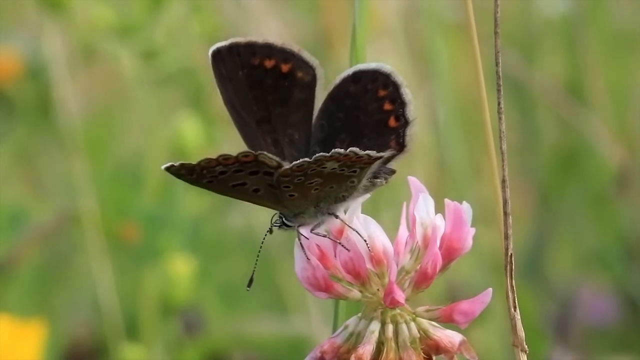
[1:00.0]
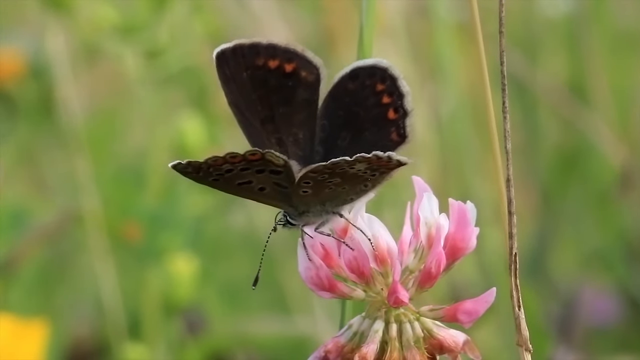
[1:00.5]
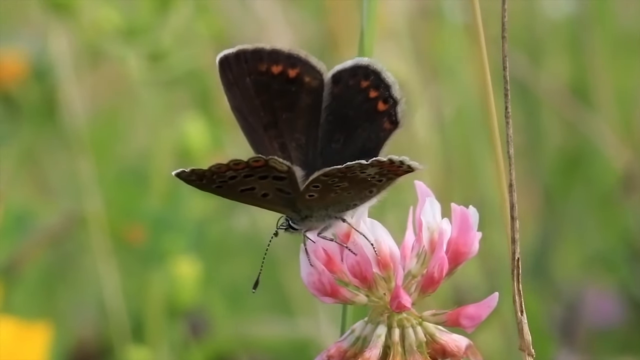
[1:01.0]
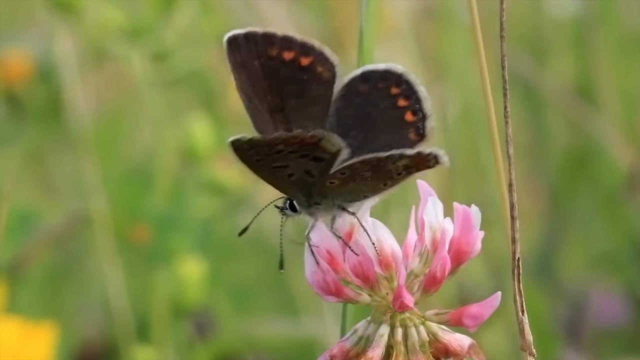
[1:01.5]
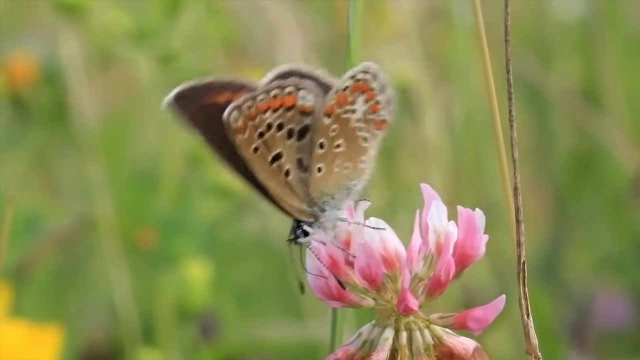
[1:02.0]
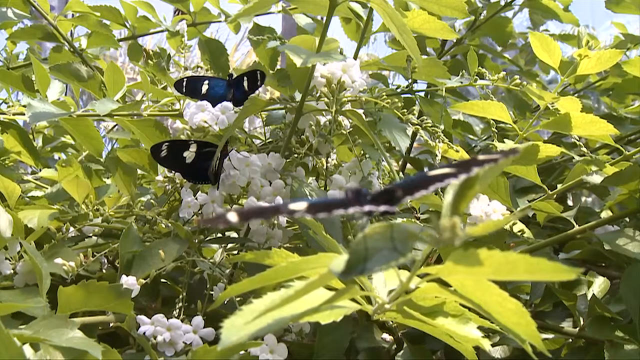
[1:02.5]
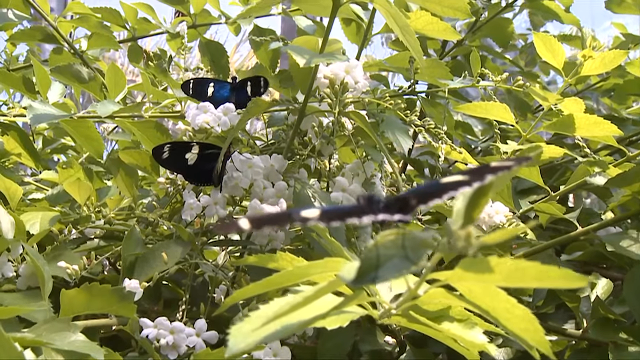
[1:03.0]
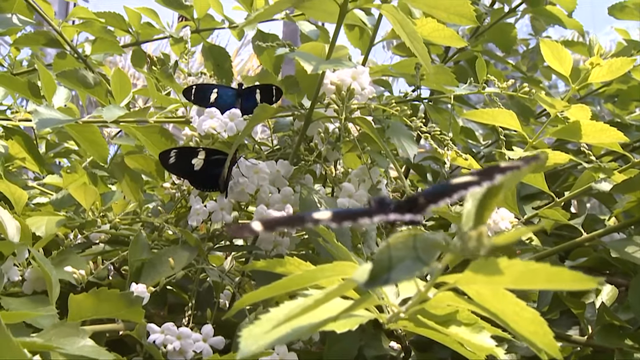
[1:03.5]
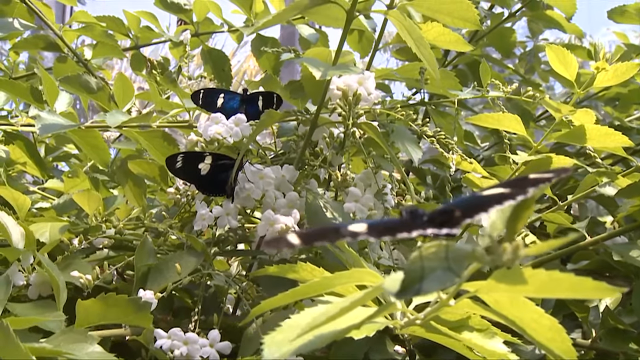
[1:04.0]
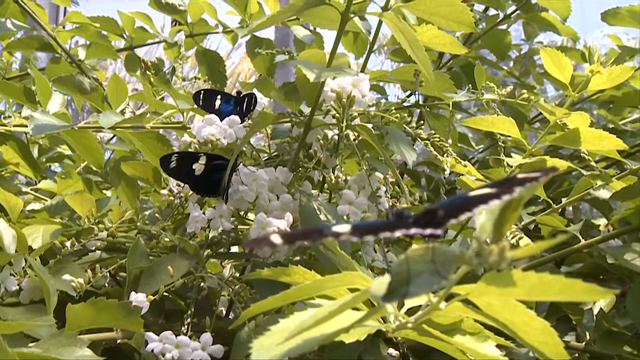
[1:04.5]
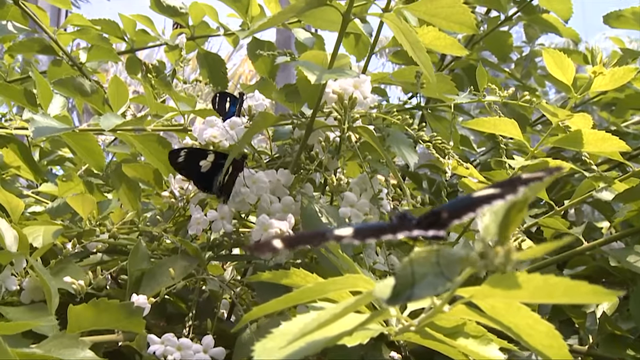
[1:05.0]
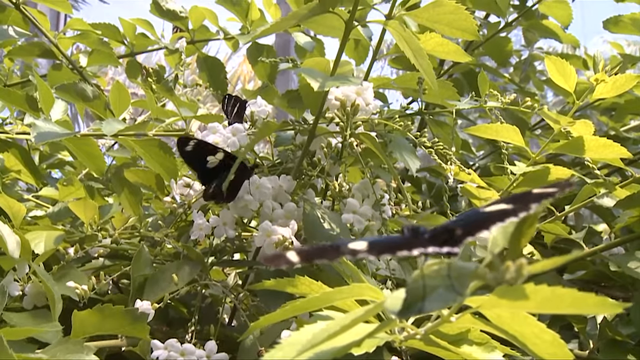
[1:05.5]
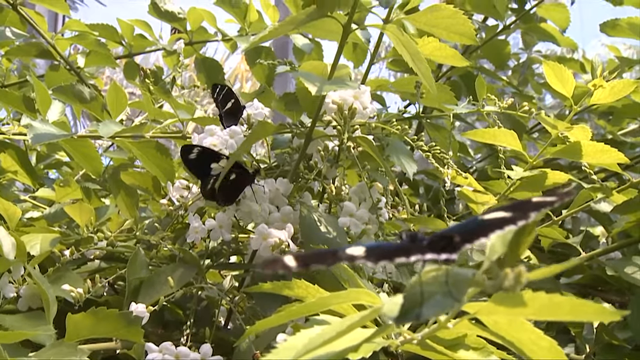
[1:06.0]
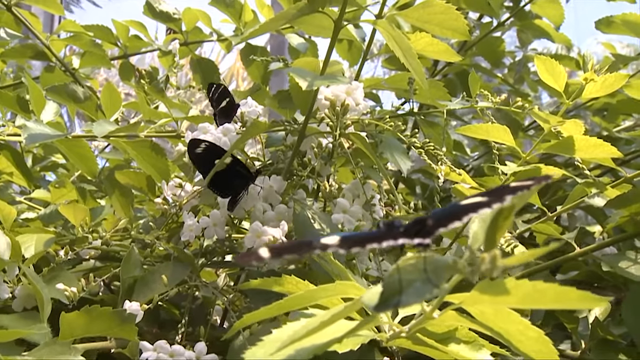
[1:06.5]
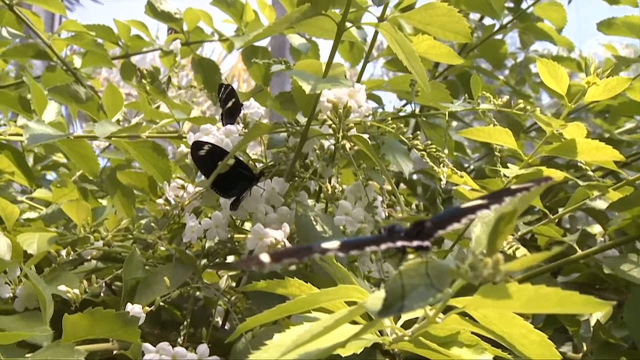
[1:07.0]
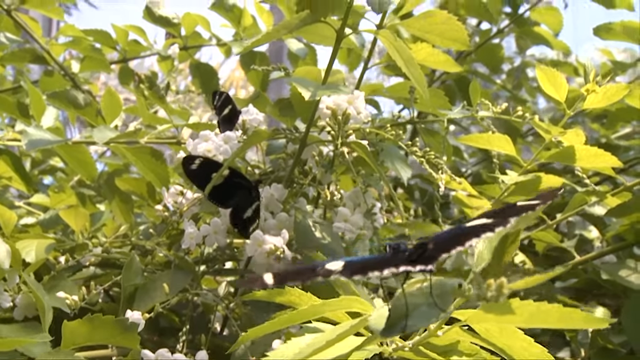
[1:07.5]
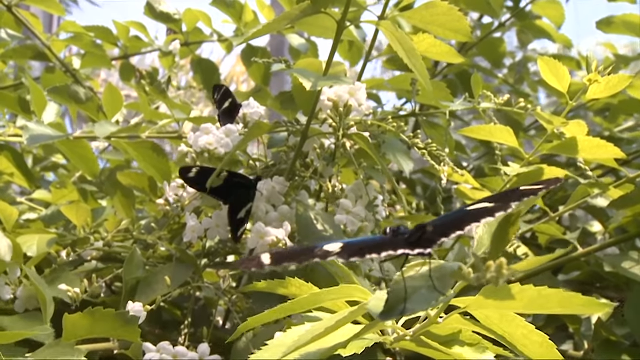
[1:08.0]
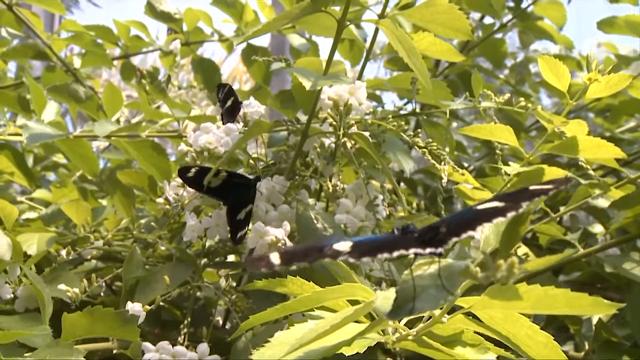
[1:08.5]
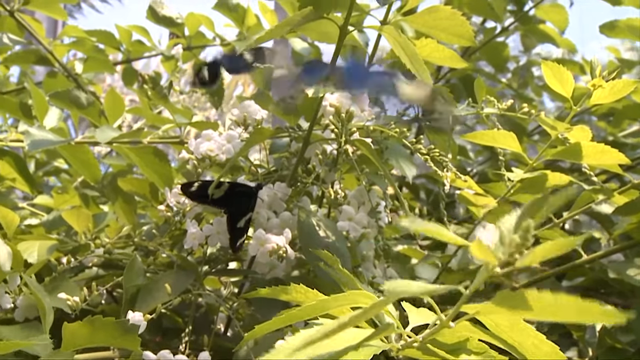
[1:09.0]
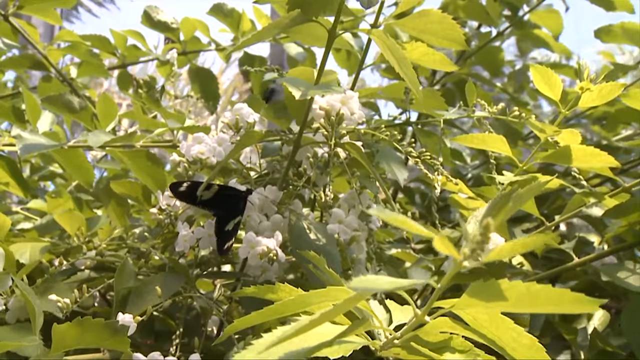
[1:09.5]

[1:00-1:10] The white lettering at the top reads "Butterflies fun butterfly facts for kids." A yellow circle on the left side has a green circle inside and a tiger in the center that is orange with black and white stripes around its chin and face. Against a blurred green background, a brown and grayish butterfly sits atop pink petals, with a brown line running up beside a yellow line. Next, three black butterflies with white markings on their wings are in the midst of green leaves, with white rounded spots among the branches. One of the butterflies takes off.